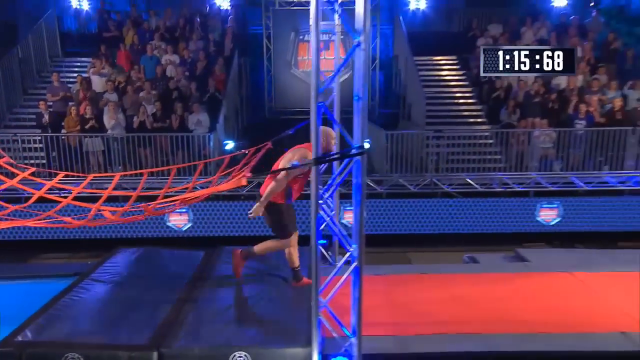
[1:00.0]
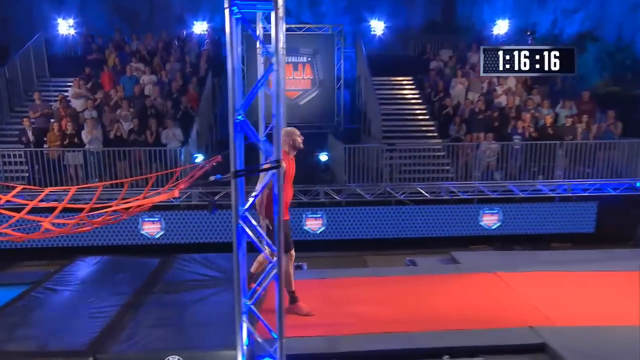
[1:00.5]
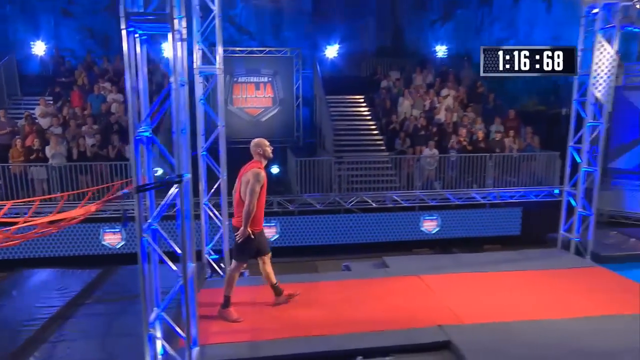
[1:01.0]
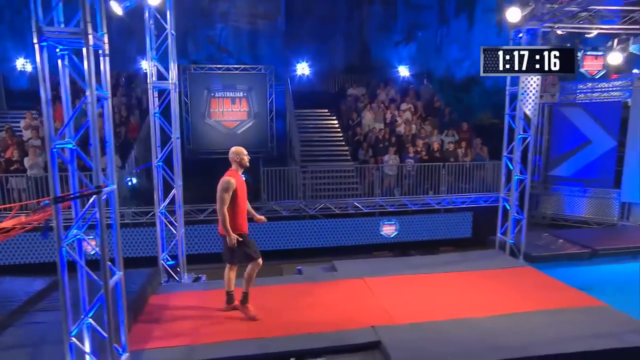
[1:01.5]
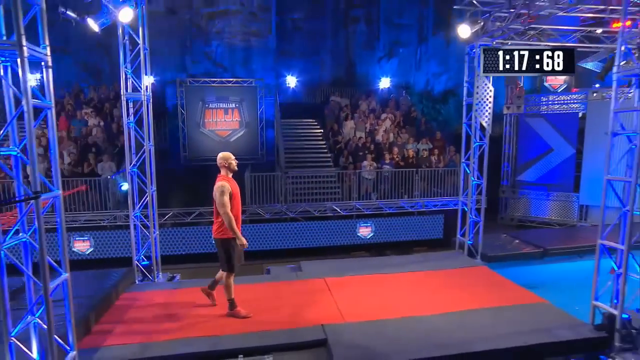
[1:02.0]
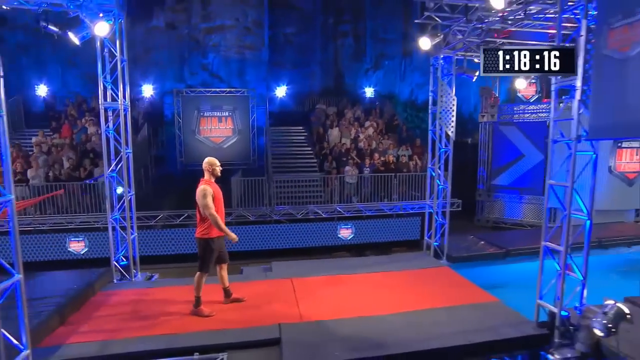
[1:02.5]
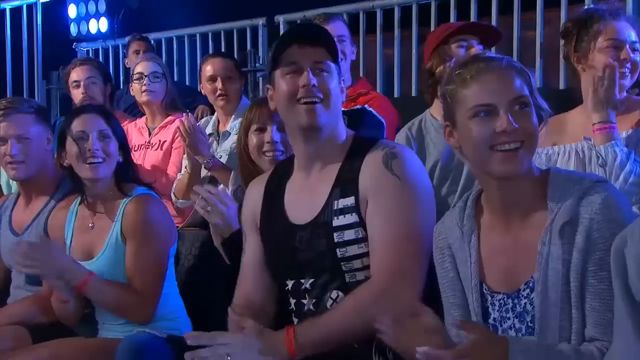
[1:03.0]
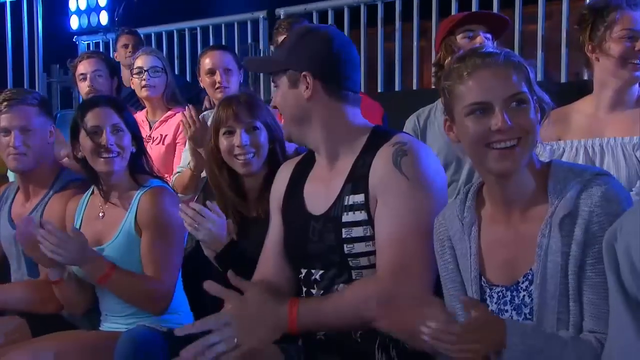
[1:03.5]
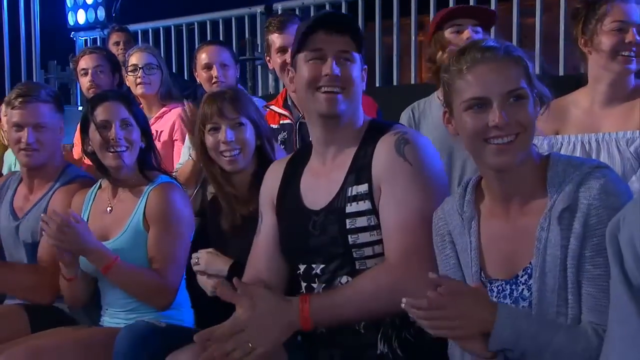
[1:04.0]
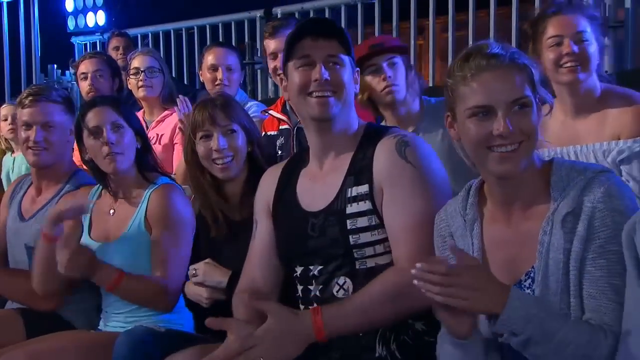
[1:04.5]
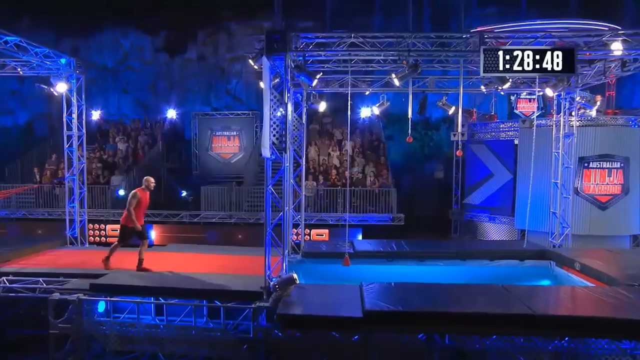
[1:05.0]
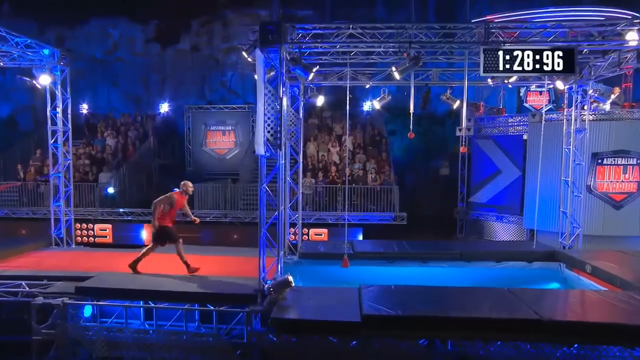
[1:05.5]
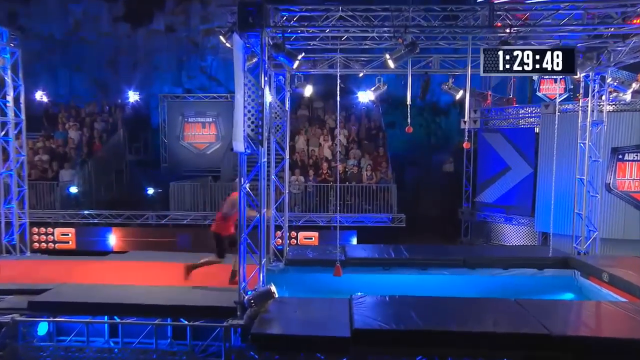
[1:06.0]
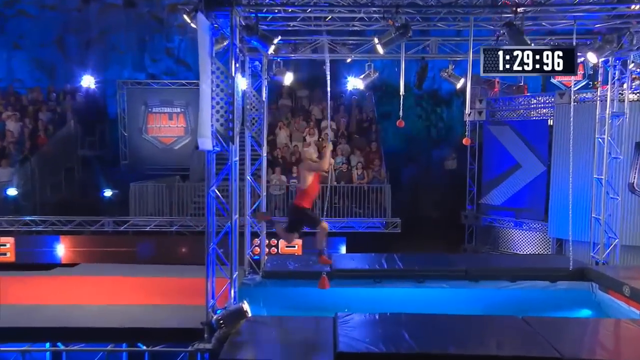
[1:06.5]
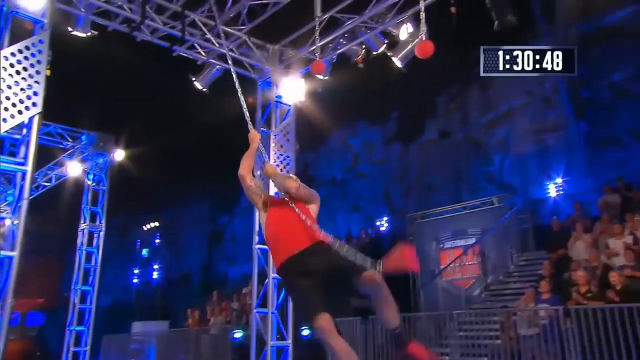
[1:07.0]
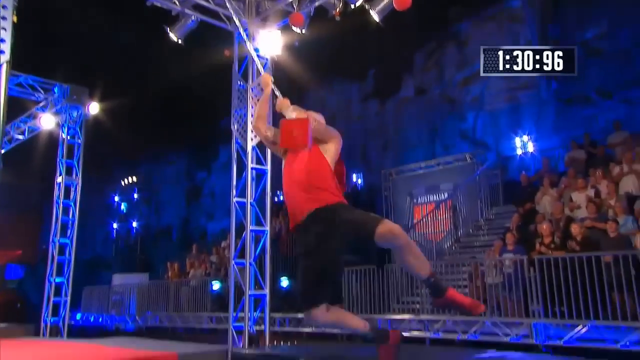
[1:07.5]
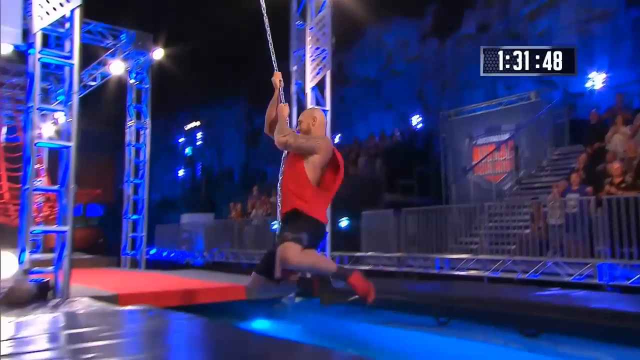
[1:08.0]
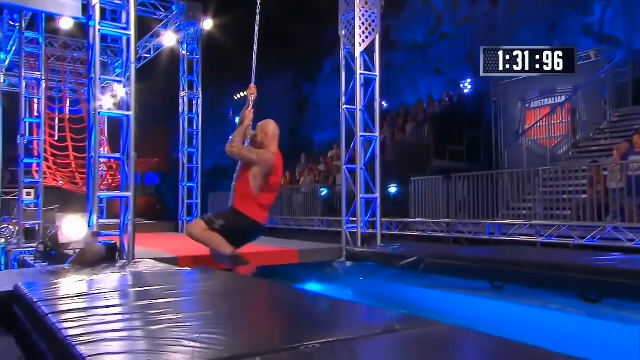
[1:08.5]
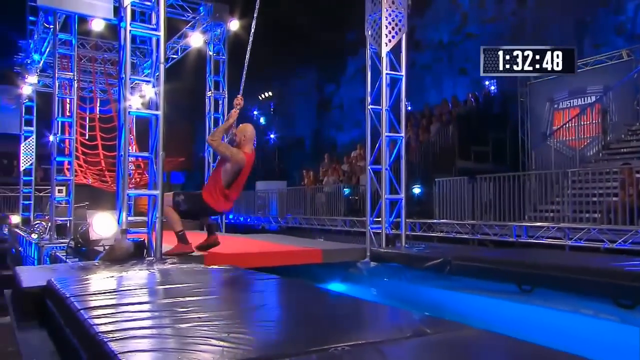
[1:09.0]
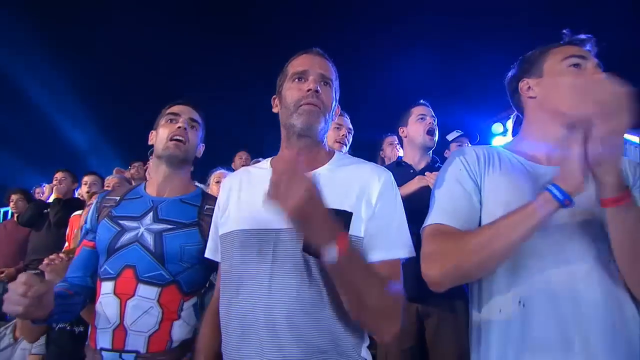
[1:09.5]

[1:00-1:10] The same participant walks and holds a metal chain, trying to make it to the other end, but it seems impossible. He walks on the red carpet holding the metal chain, and it swings him back. A lot of people are present, still cheering and clapping, and there is a good lighting system. He seems to be trying to finish the course.